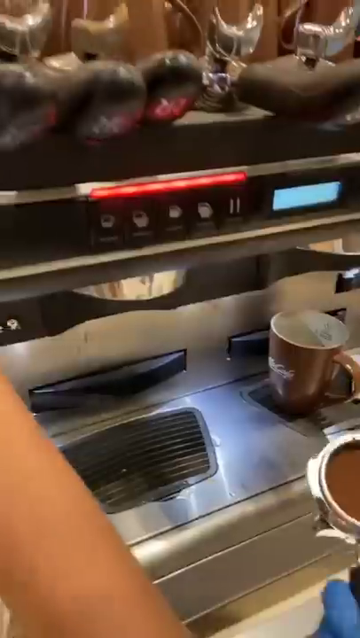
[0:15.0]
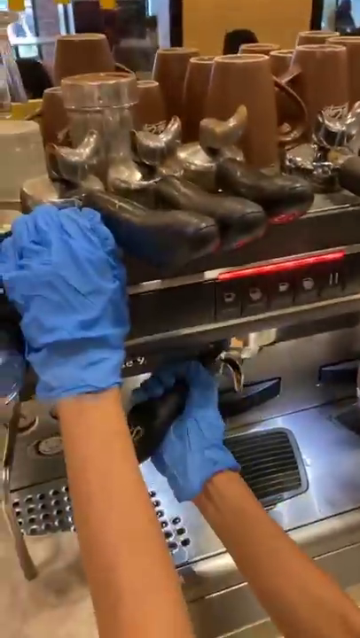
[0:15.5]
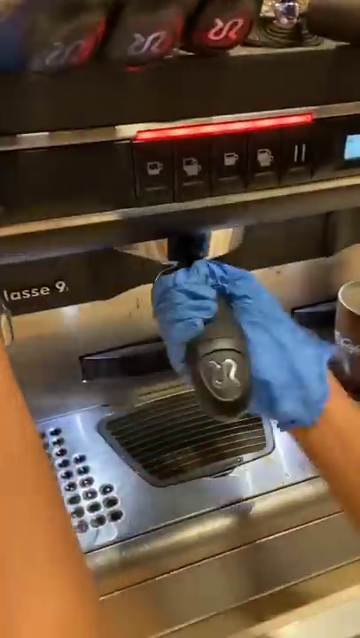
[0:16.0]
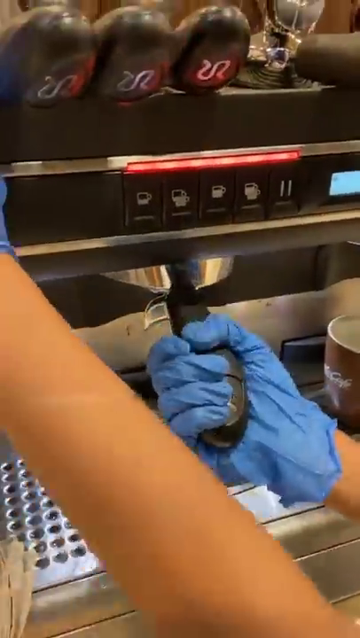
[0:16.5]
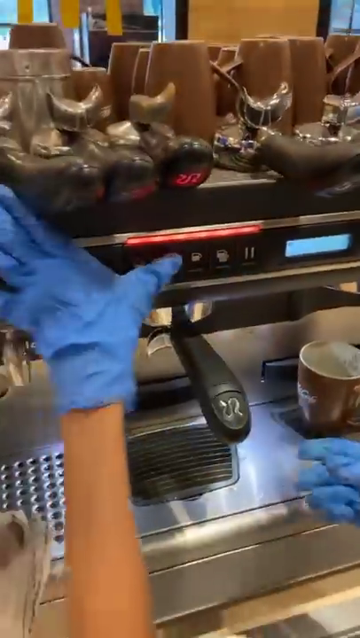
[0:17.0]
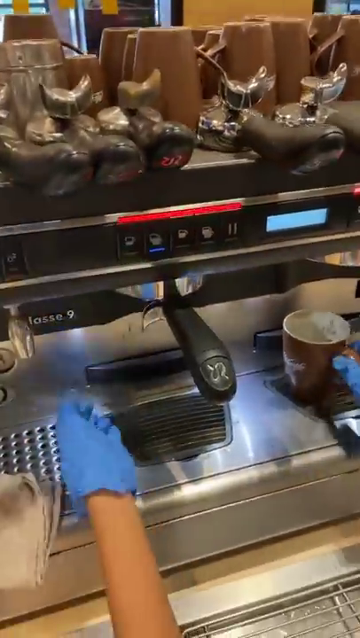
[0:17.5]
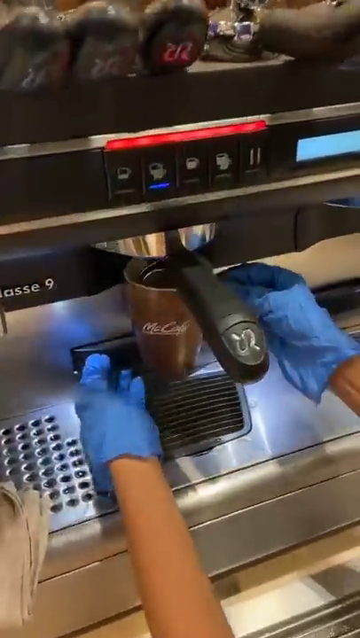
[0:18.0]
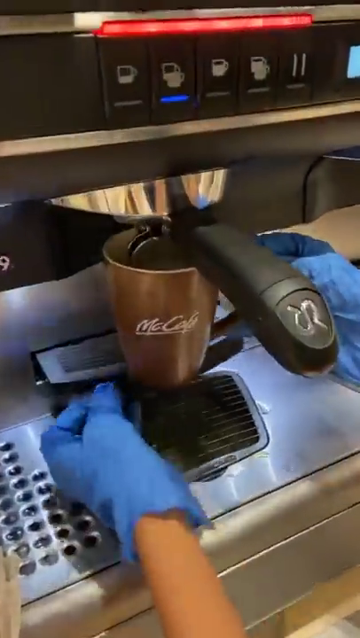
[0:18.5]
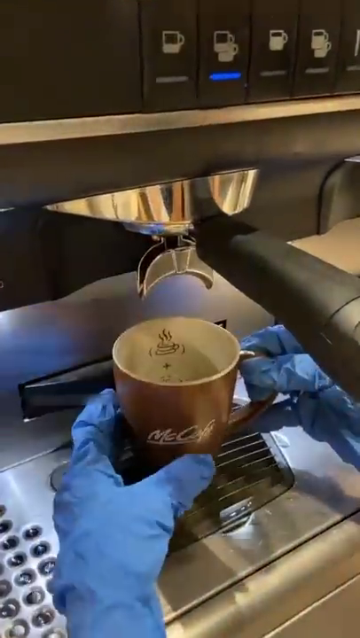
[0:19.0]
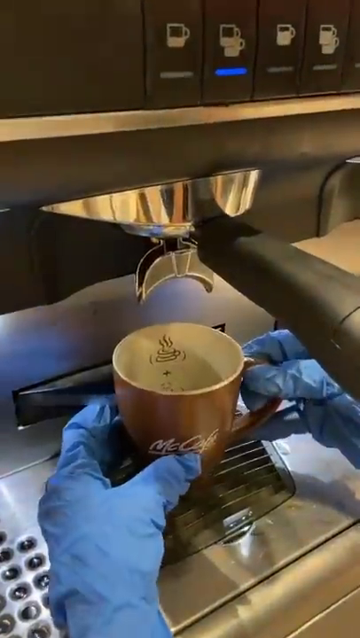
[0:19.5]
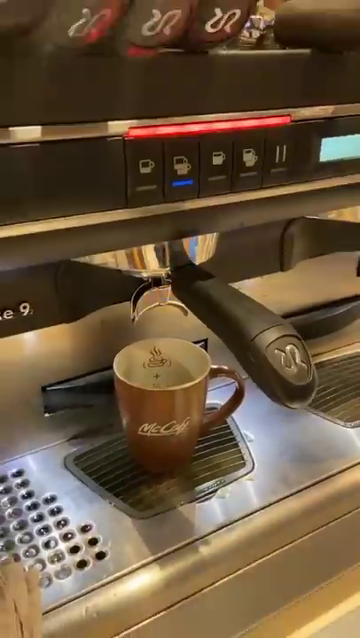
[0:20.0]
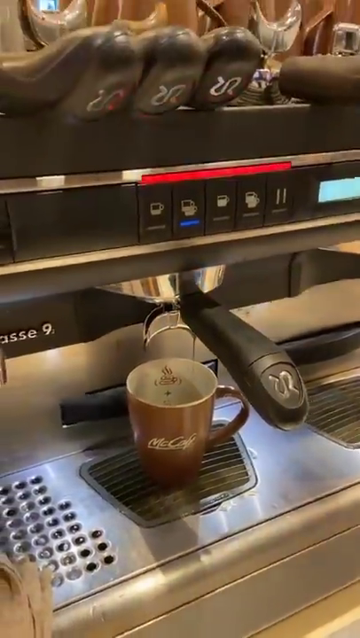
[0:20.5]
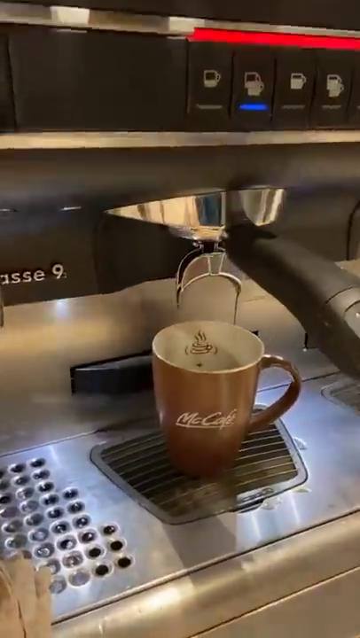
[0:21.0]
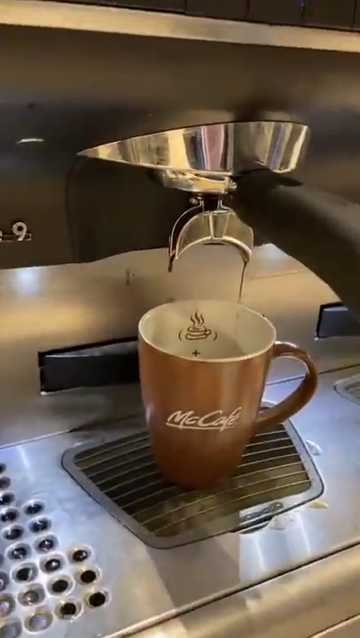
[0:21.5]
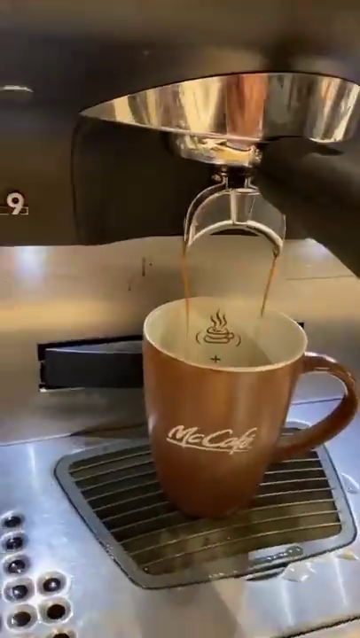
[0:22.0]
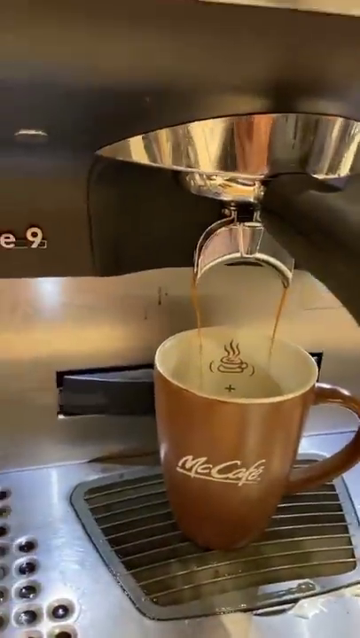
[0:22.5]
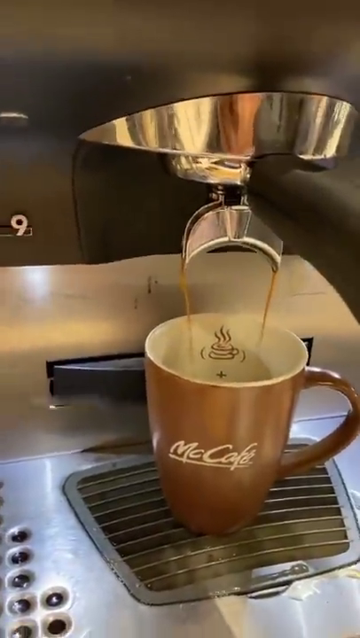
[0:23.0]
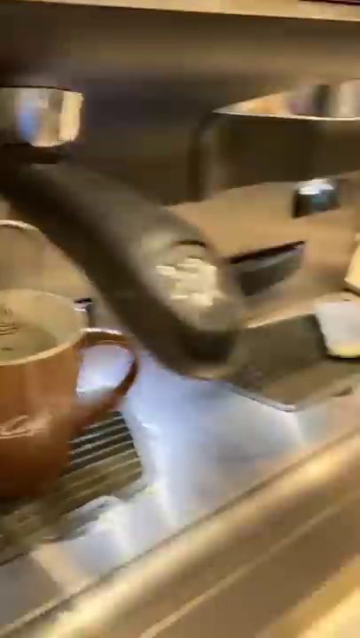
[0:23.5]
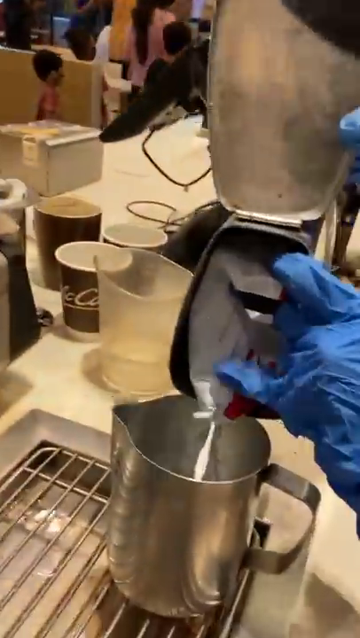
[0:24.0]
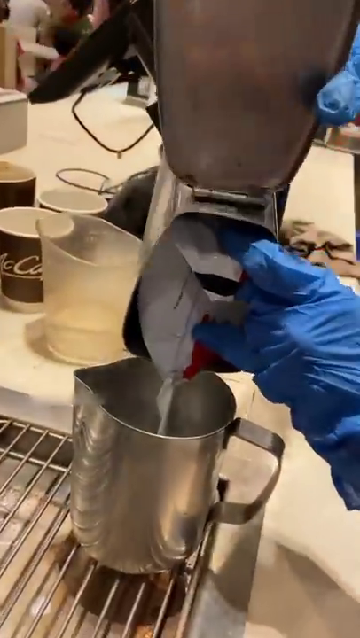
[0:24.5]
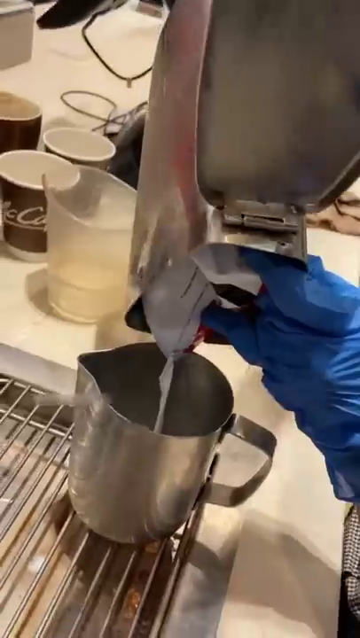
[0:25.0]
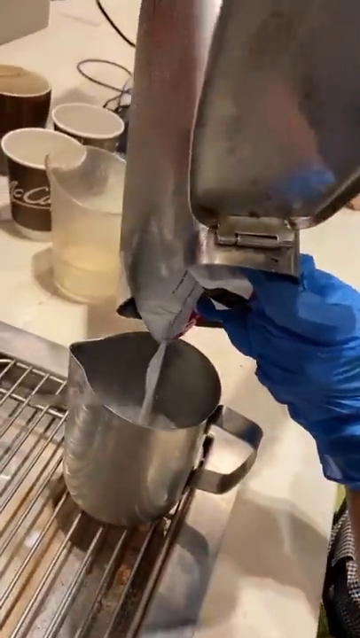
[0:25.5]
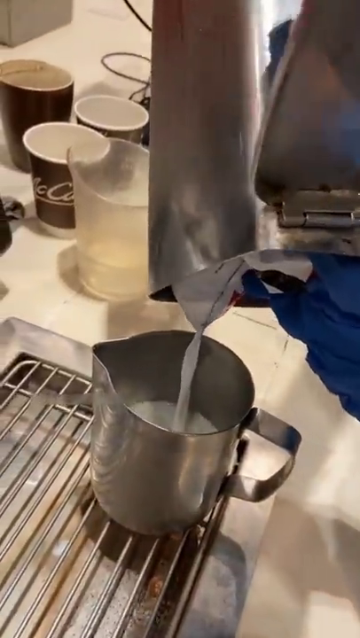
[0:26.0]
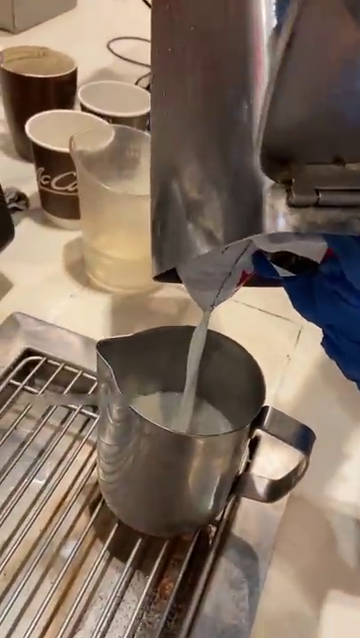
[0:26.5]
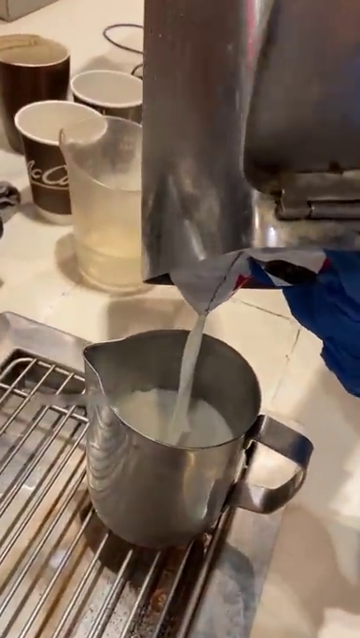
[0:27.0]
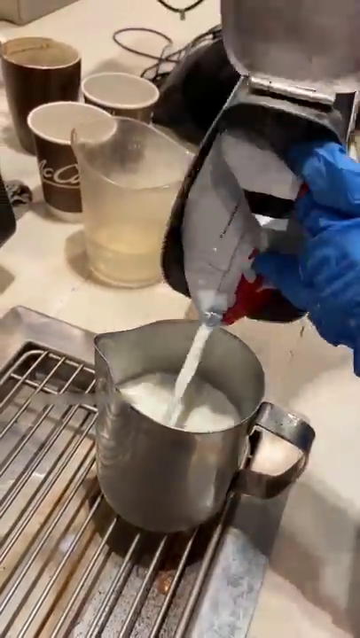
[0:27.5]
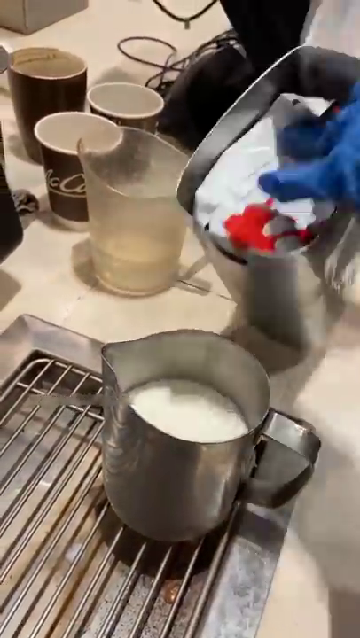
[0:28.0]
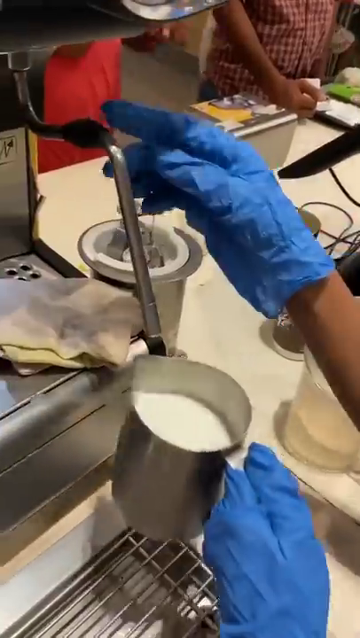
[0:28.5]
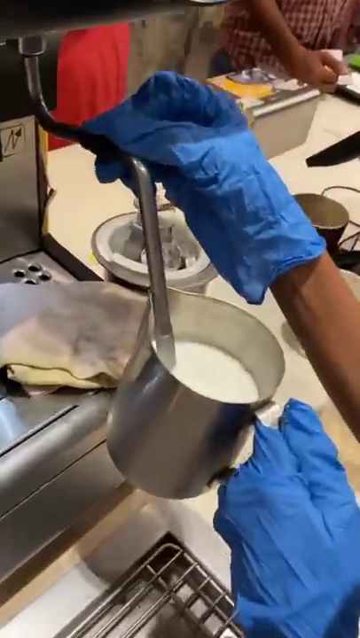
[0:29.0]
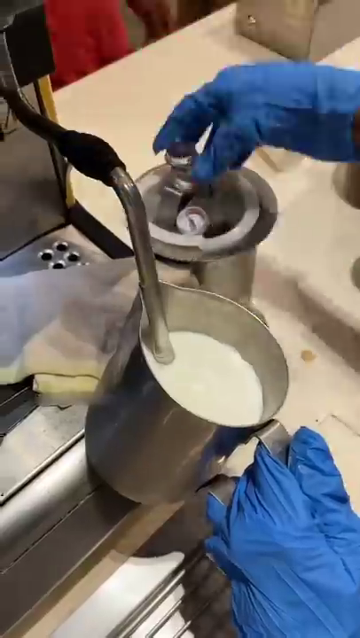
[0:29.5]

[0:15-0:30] In a commercial kitchen, a person wearing blue latex gloves holds a scoop of ground coffee in their right hand and attaches it to a large industrial coffee machine. They press some buttons on the machine's display and put a brown disposable cup with "McCafe" on the front in white letters underneath the spout. When they pull the handle, thin streams of coffee come out of the spout into the cup, which has a handle on its right side. While the coffee slowly trickles into the cup, the camera turns to show the person pouring milk or cream very slowly into a handled silver pitcher. They fill it most of the way and then insert a silver metal rod into the pitcher, presumably about to froth the milk or cream for the coffee.